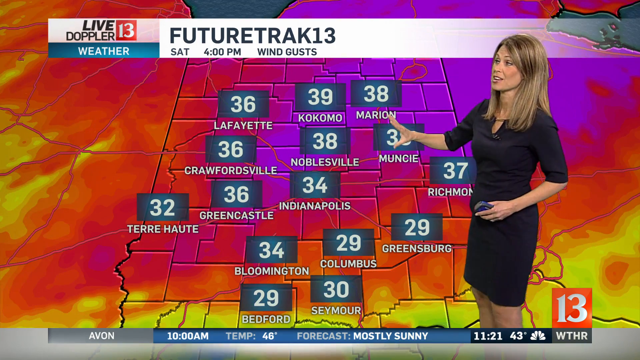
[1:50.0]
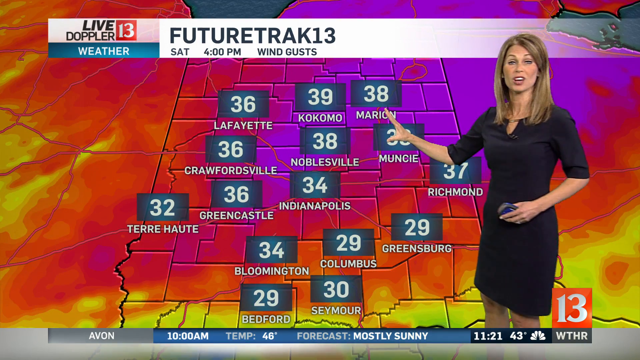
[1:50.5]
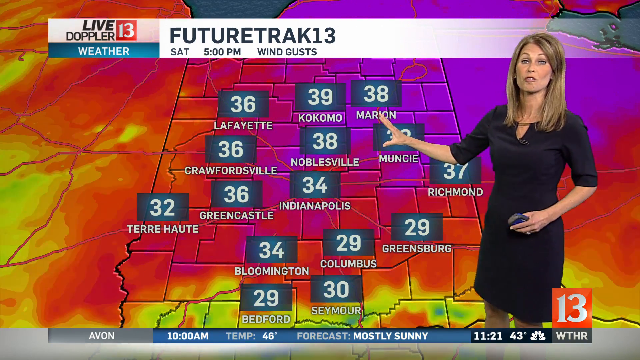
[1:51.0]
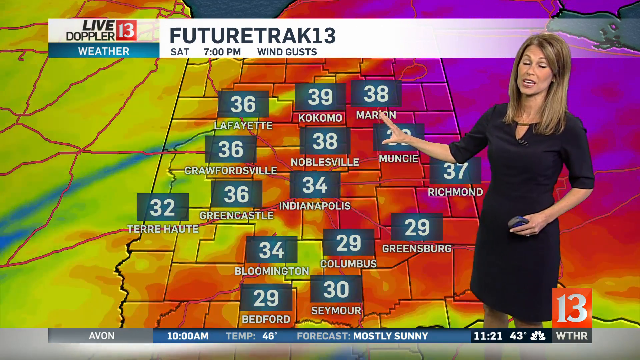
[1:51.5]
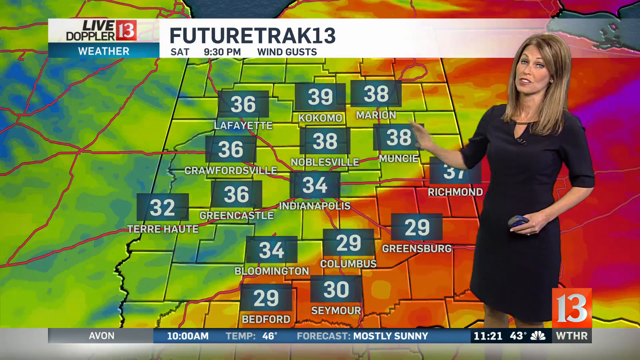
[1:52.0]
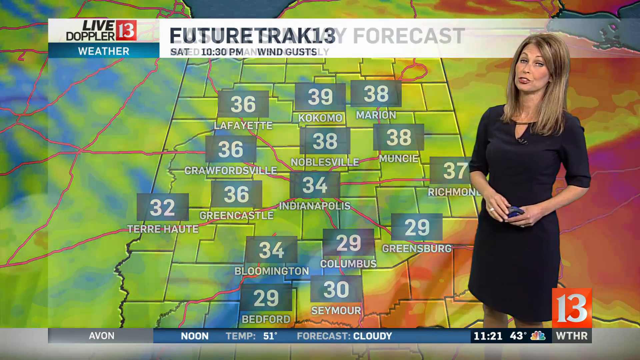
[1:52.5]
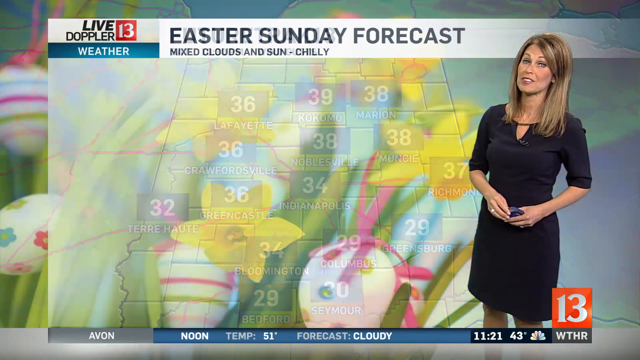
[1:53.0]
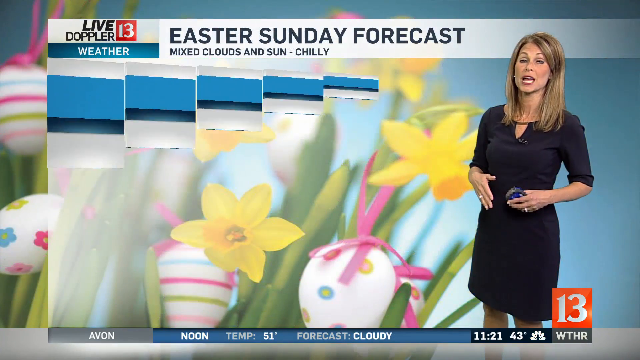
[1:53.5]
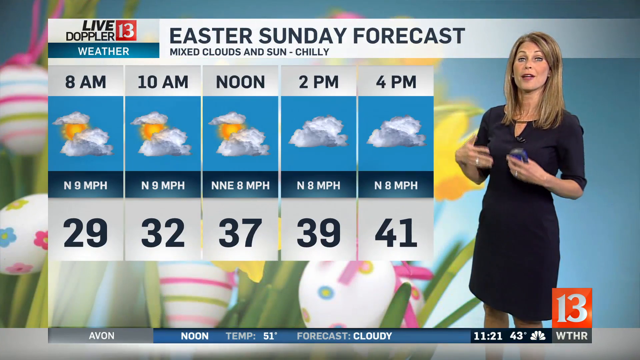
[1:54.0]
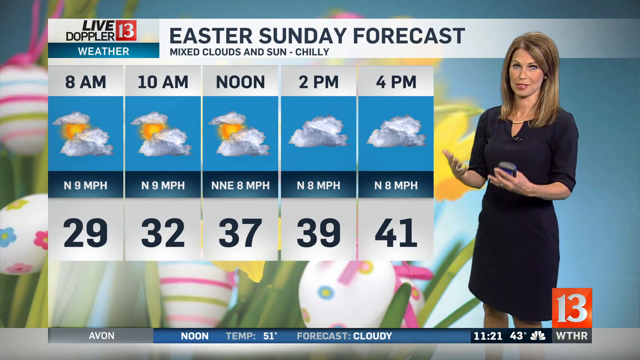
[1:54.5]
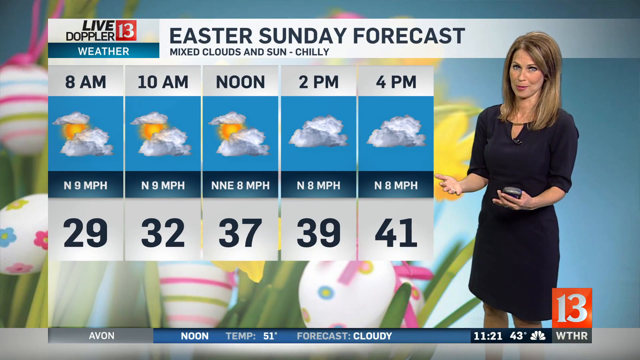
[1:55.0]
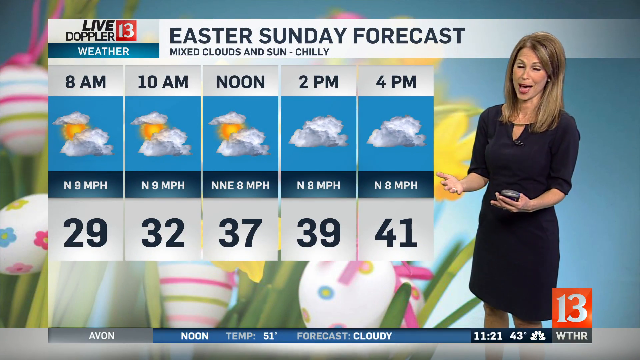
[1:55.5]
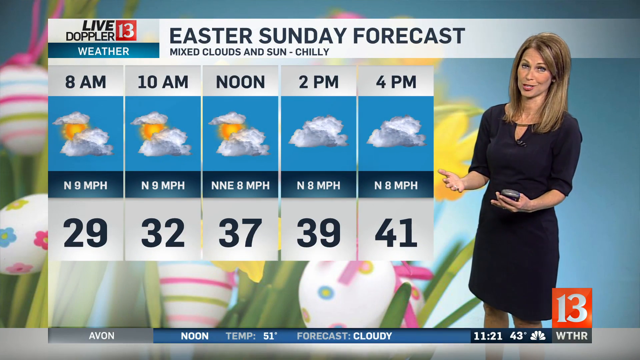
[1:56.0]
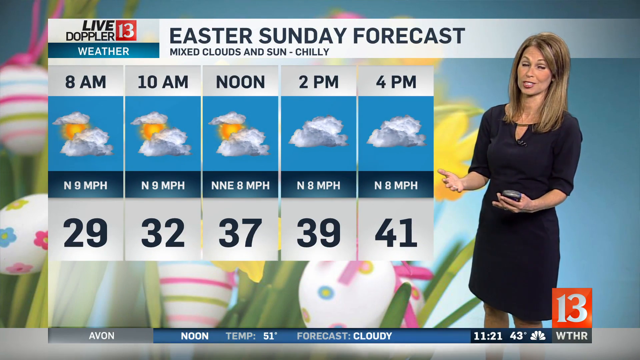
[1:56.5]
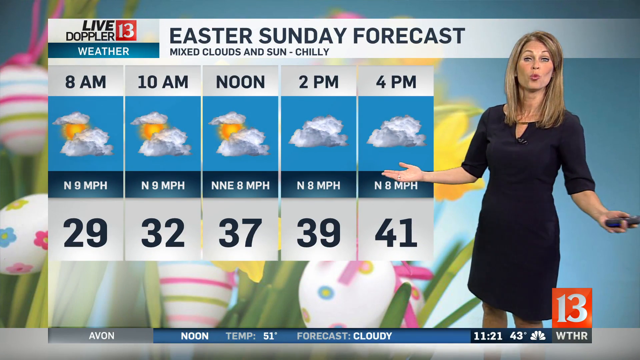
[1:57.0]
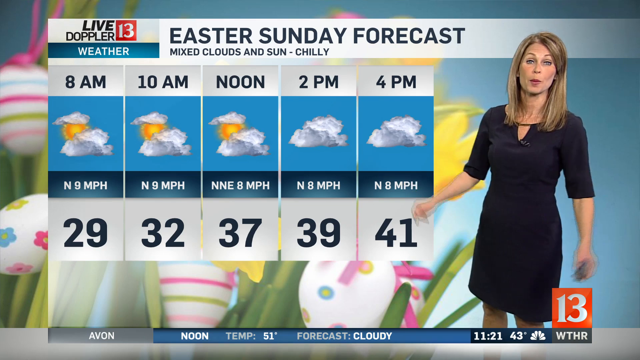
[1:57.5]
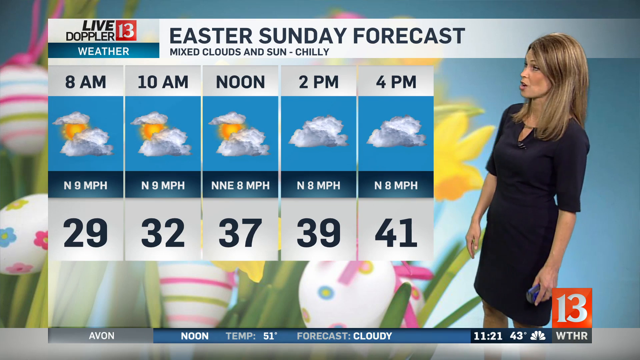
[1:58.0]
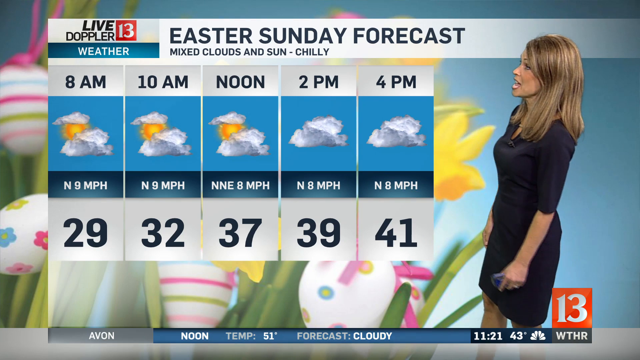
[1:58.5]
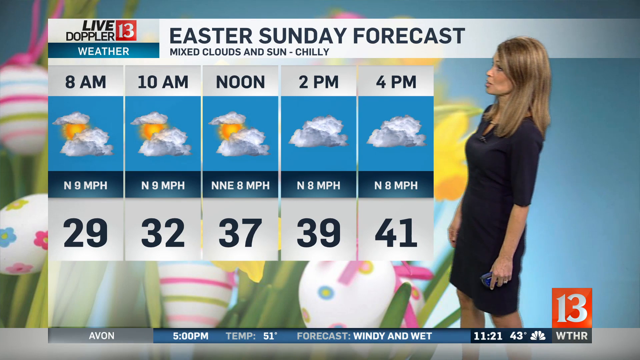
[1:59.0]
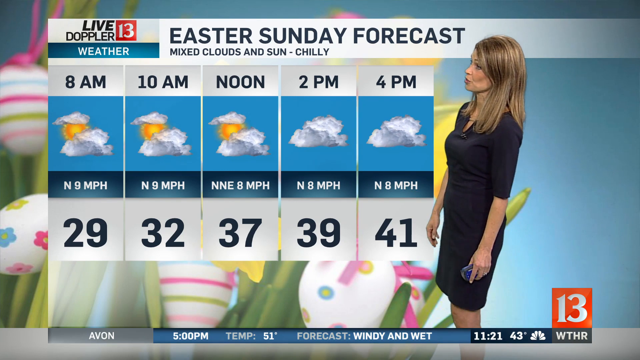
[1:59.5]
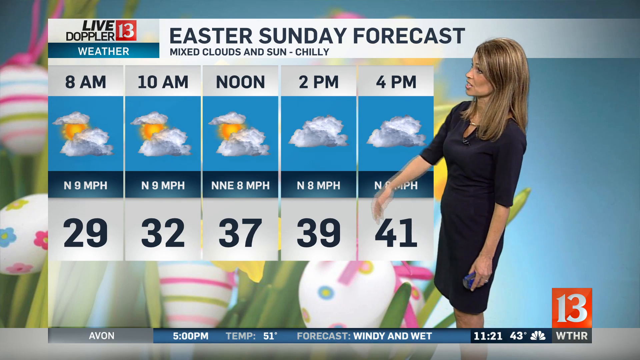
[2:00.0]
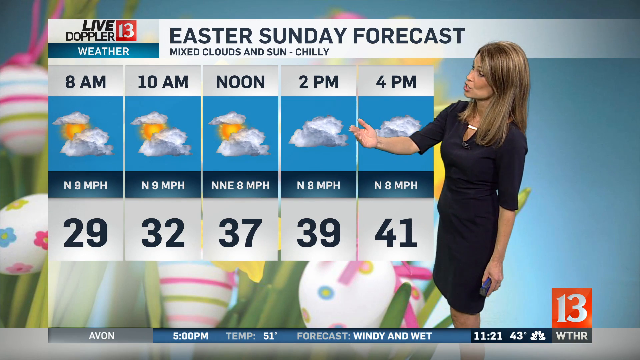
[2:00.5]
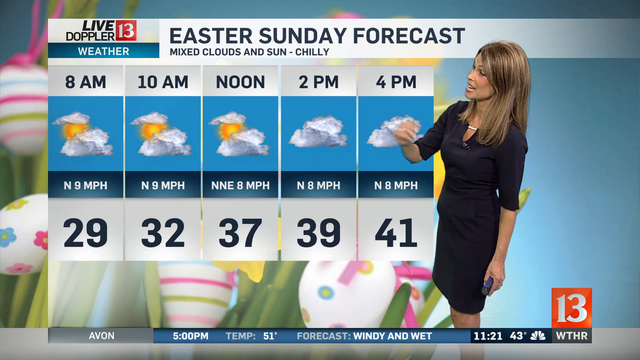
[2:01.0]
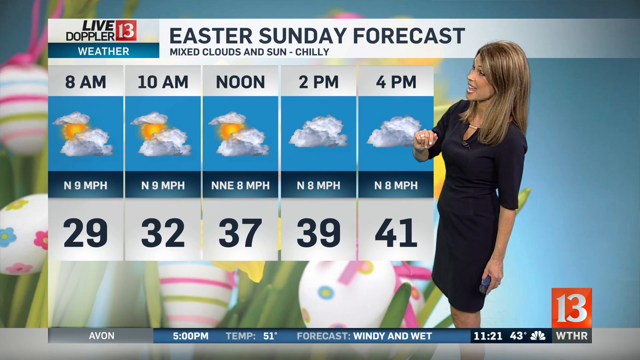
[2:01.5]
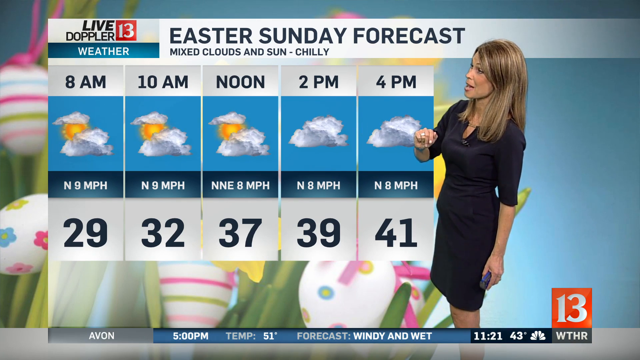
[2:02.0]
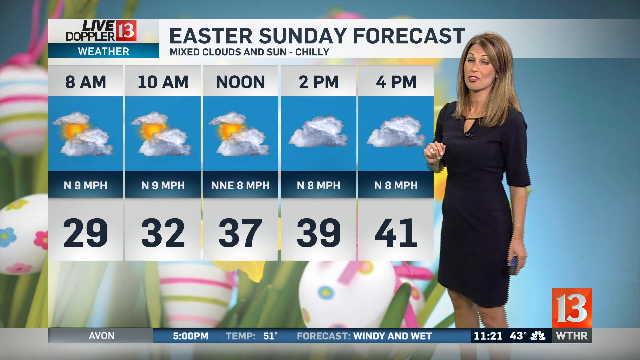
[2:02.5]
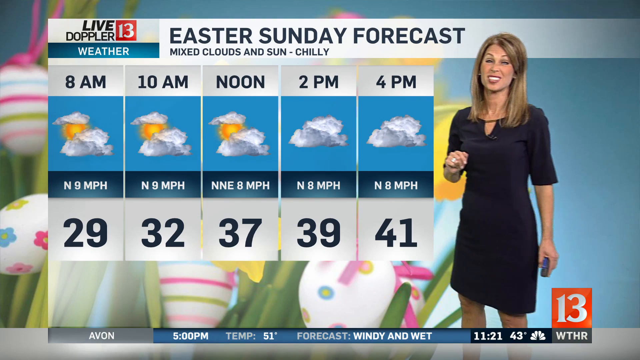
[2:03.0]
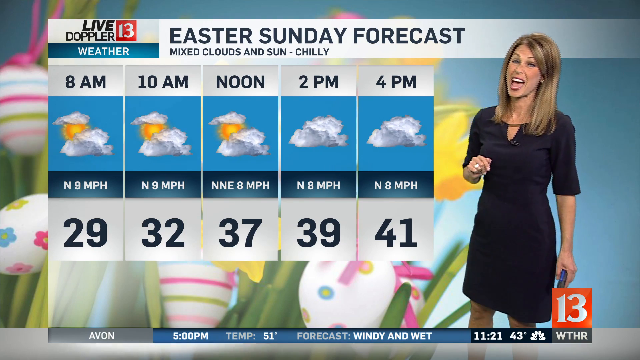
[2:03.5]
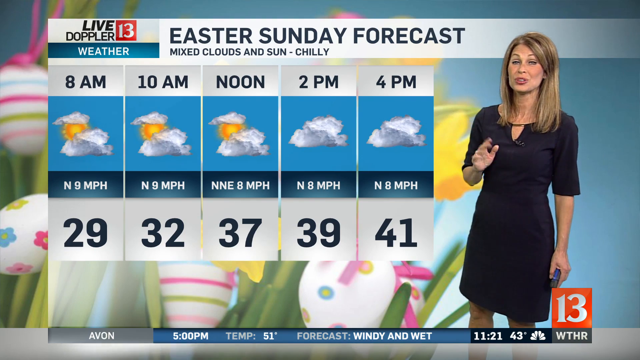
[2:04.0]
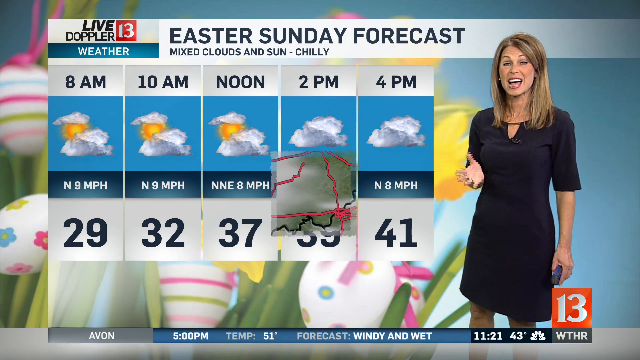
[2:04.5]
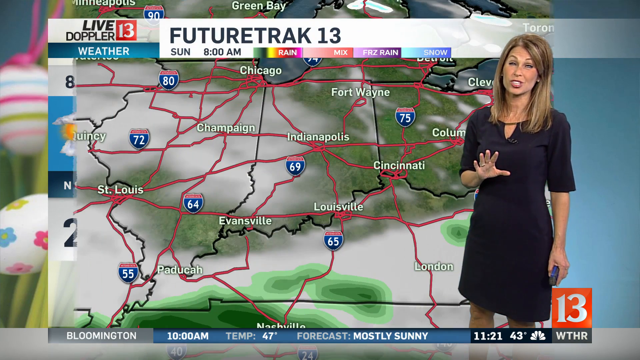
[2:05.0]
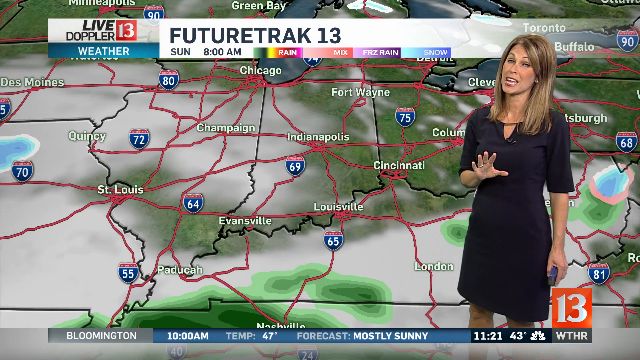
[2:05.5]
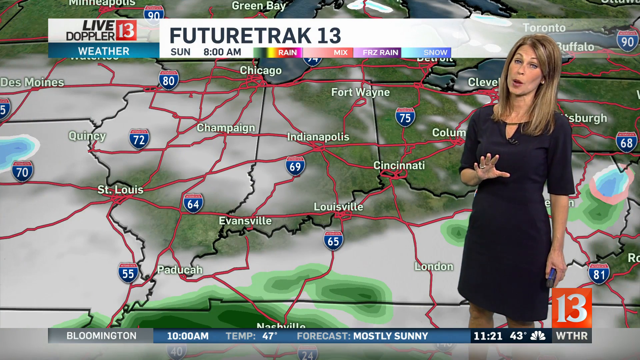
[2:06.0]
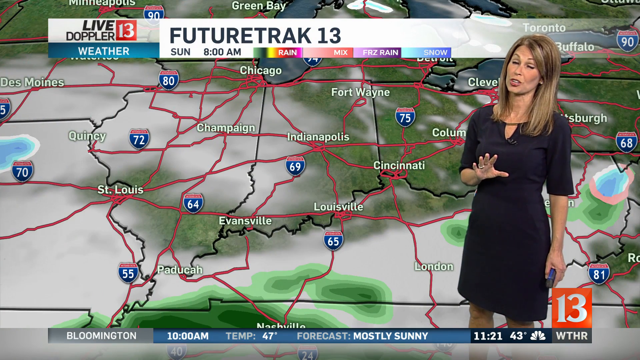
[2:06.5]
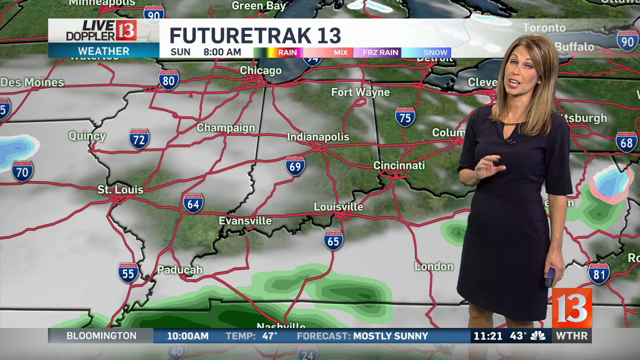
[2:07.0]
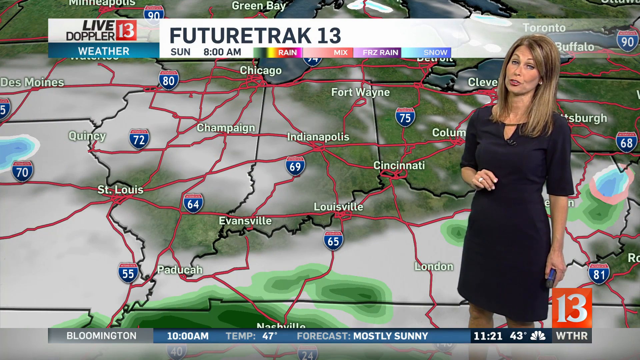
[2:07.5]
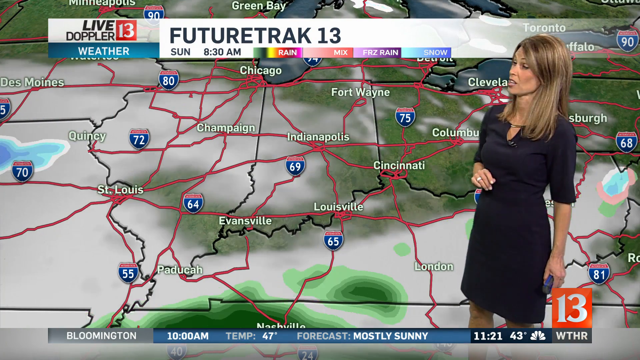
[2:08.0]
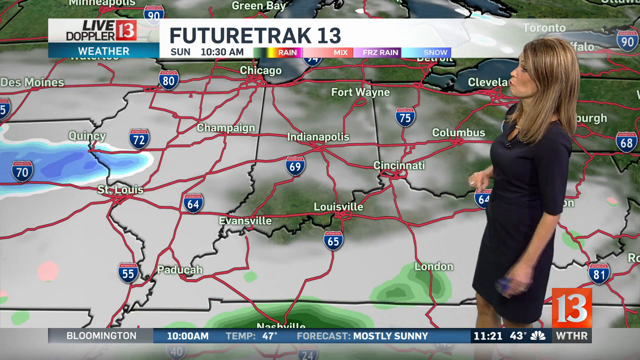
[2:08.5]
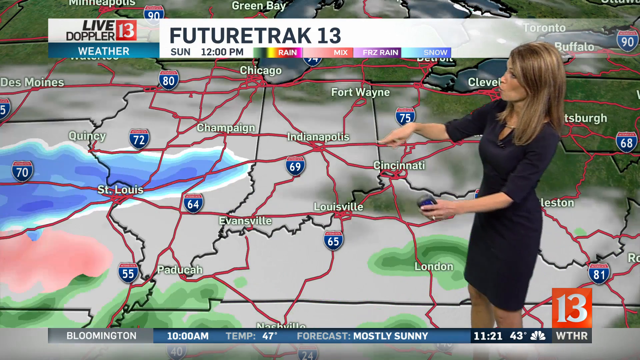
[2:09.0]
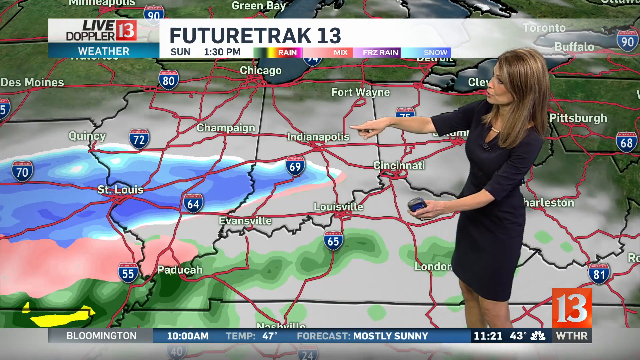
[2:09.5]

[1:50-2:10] The background of the screen is mostly three colours: purple, orange and yellow. Degrees are shown for the areas: Lafayette 36, Kokomo 39, Marion 38, Crowfordsville 36, Noblesville 38, Muncie 38, Terre Haute 32, Greencastle 36, Indianapolis 34, Richmond 37, Bloomington 34, Columbus 29, Greensburg 29, Bedford 29 and Seymour 30. Next comes the Easter Sunday forecast, "mixed clouds and sun" and "chilly", with 29 degrees at 8 a.m., 32 degrees at 10 a.m., 37 degrees at noon, 39 degrees at 2 p.m. and 41 degrees at 4 p.m.